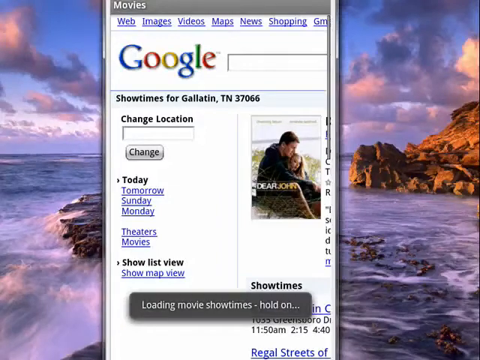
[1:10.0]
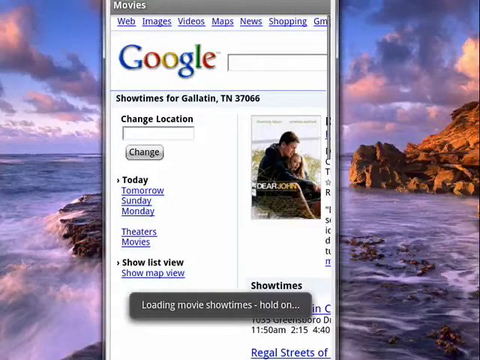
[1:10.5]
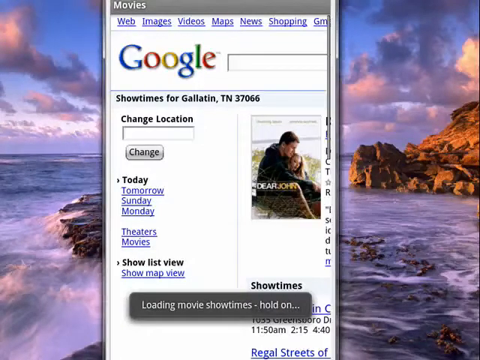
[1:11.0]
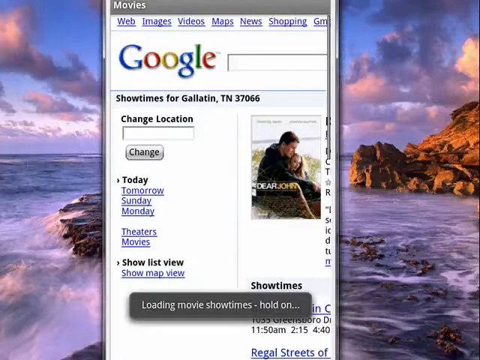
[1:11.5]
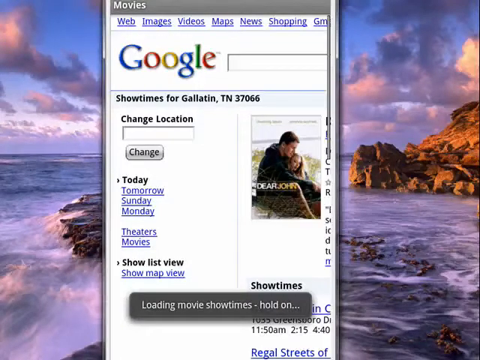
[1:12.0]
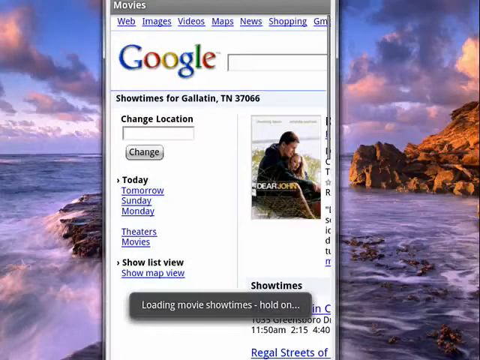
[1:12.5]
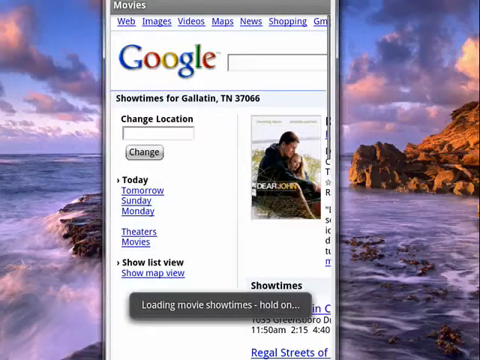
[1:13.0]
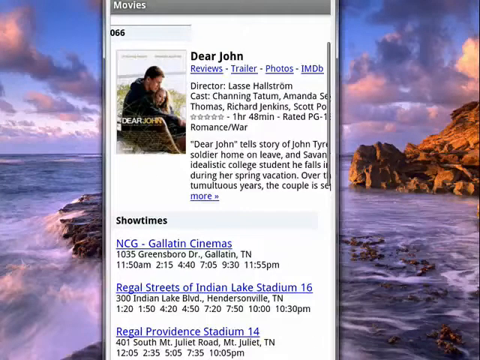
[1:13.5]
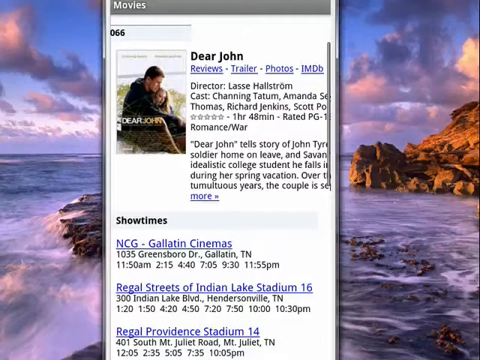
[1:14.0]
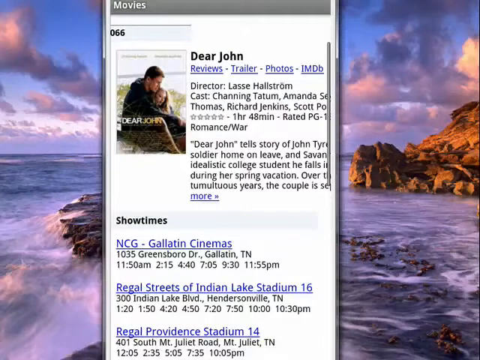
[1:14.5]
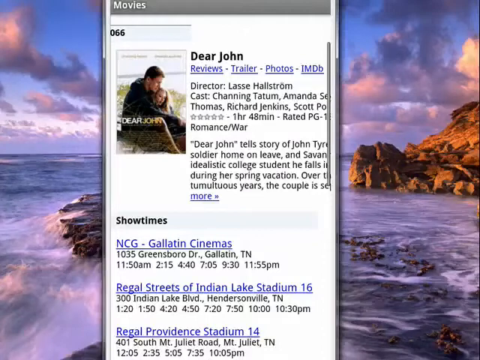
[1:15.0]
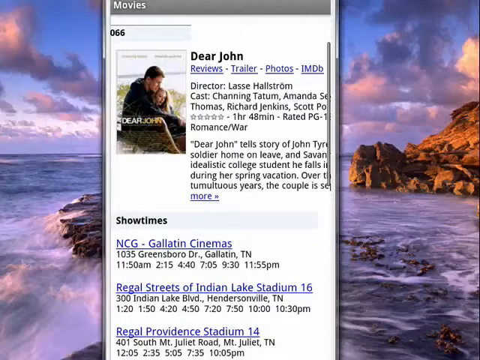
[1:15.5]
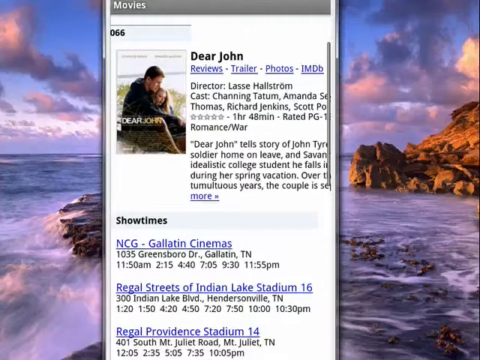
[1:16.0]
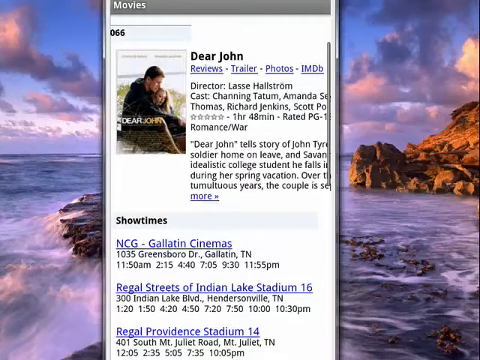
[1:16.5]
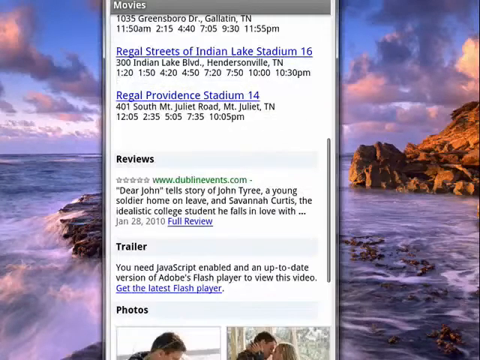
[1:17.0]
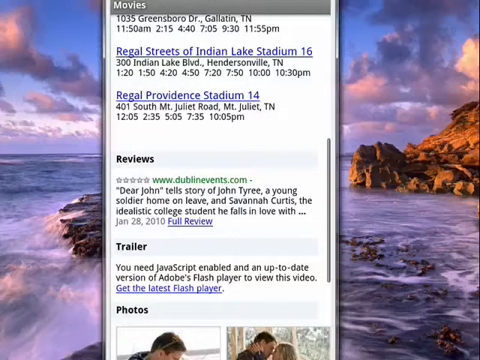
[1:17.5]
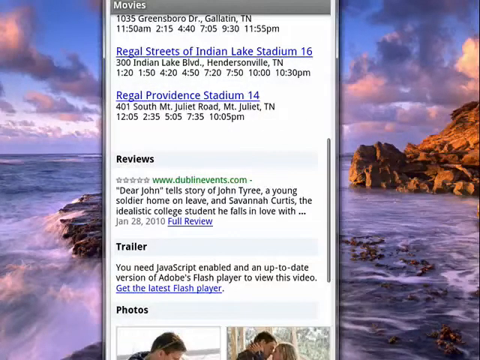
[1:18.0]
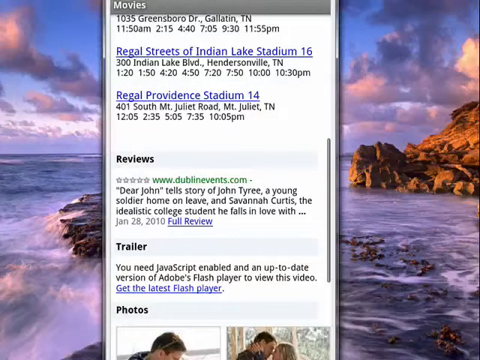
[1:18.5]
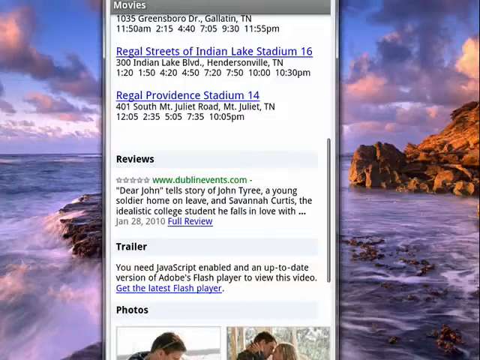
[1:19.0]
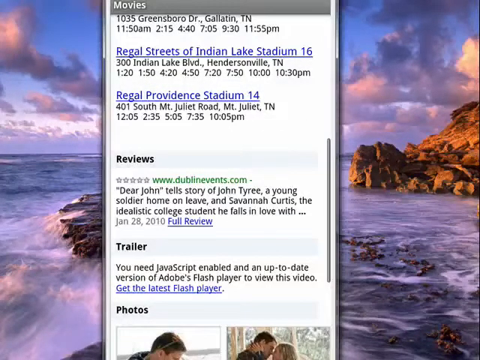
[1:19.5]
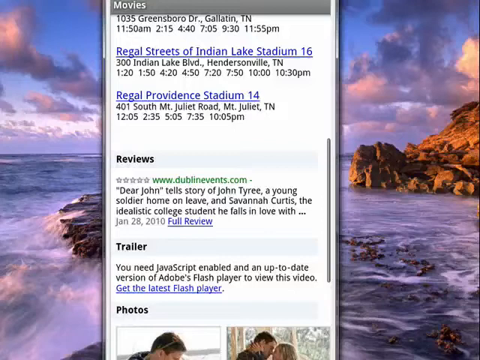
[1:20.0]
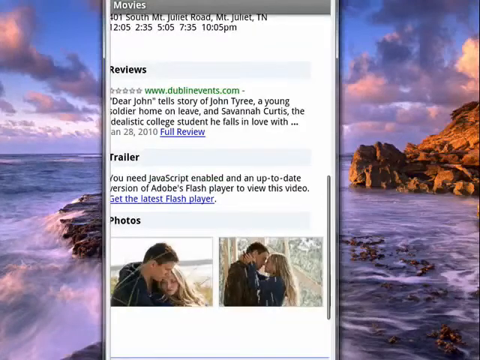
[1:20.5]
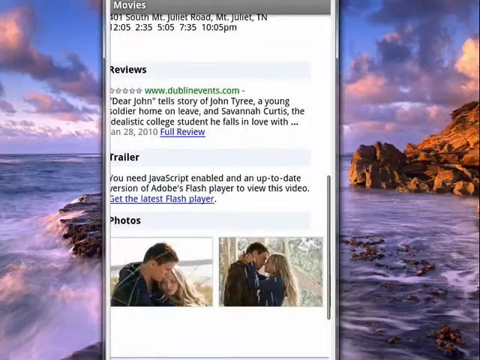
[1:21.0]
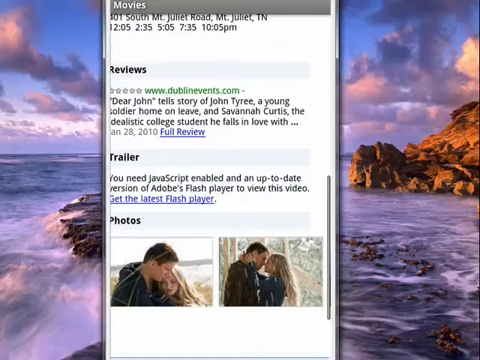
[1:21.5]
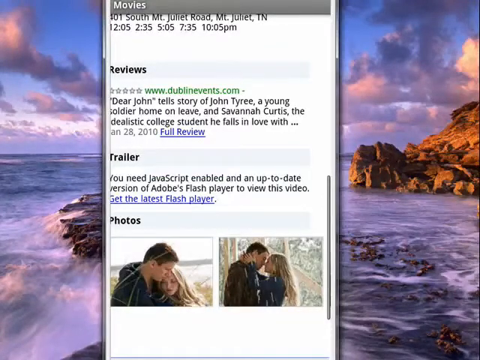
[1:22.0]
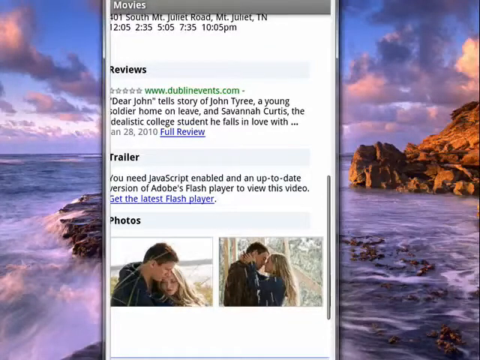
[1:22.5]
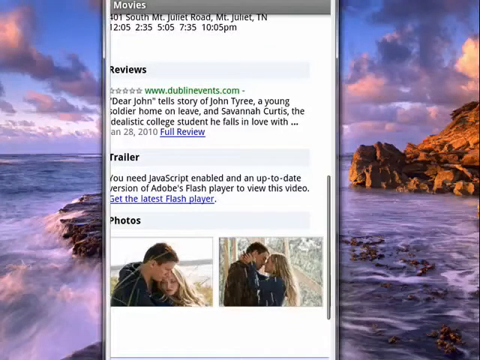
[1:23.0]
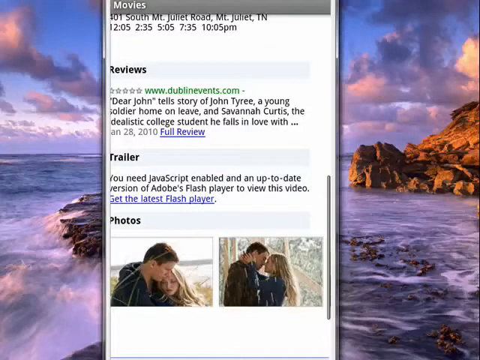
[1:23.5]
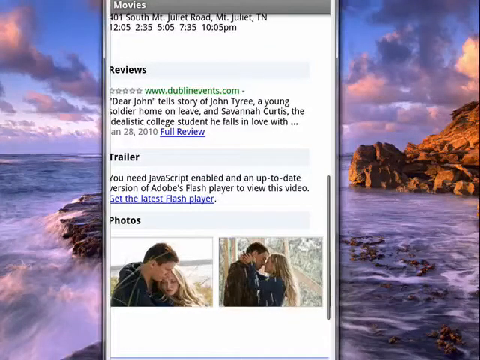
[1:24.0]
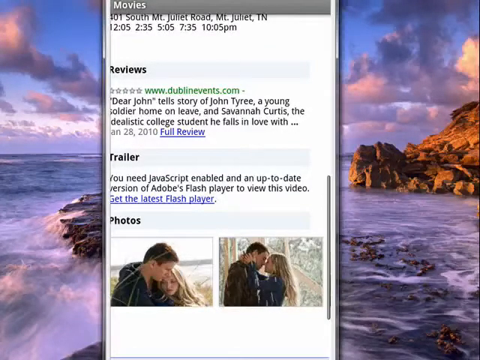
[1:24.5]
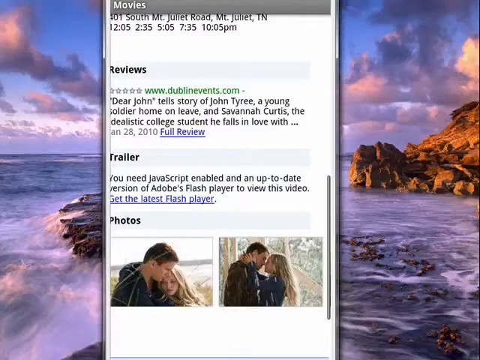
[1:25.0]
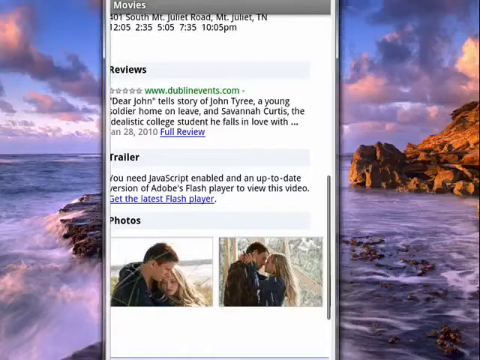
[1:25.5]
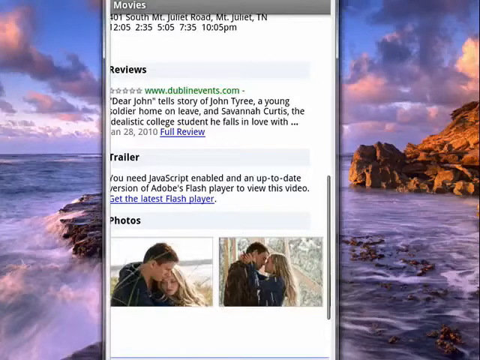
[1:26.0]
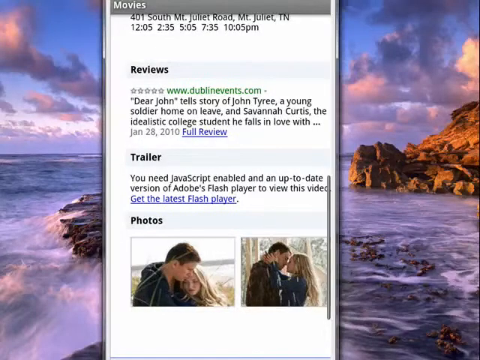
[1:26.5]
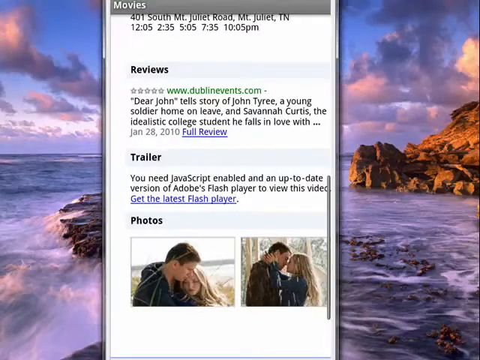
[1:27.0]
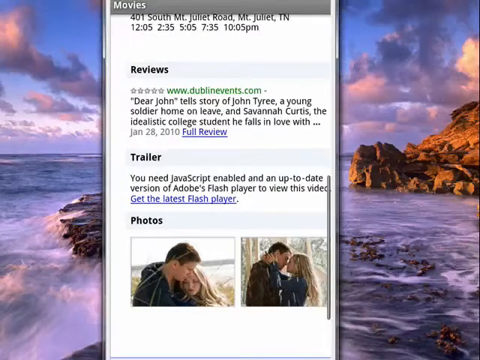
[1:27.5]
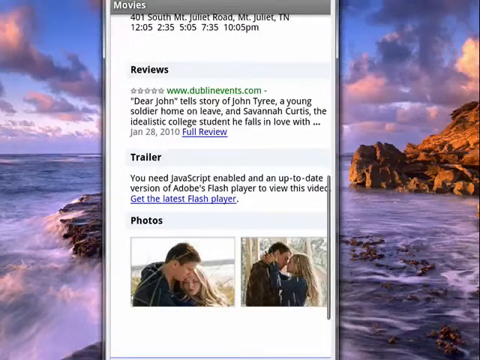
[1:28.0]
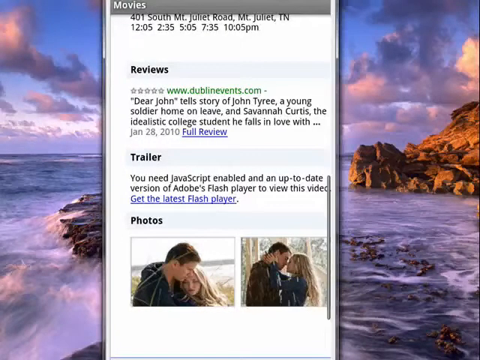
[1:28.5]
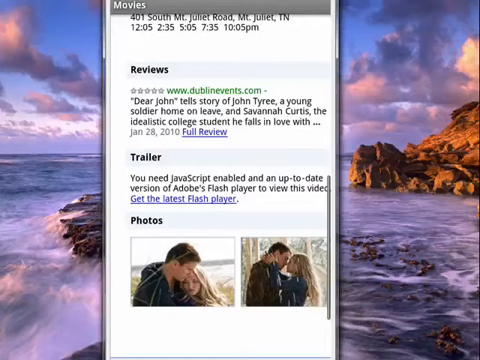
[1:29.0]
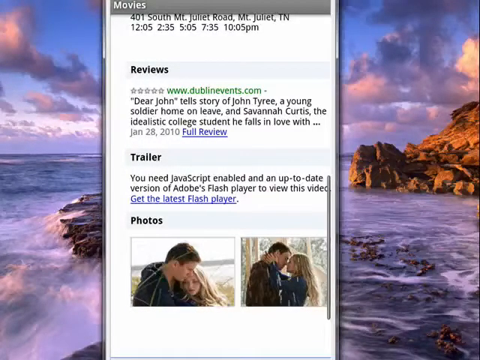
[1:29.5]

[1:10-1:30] The showtimes are for the zip code entered earlier: the page says "showtimes for Gallatin TN 37066," with an option underneath to change the location using a text box. It lists different days to pick for a showtime, such as tomorrow, Sunday and Monday, and can be viewed as either a list view or a map view. Various cinemas are listed below under the showtime section: NCG Gallatin Cinemas, with multiple times from 11.50am up to 11.55pm, and Regal Streets of Indian Lake Stadium, with times from 1.20pm up to 10.30pm. The page scrolls down to show the reviews, then the trailer, and then photos of the actor and actress who play the main roles in the movie. In the trailer section the trailer cannot be seen, as a message says JavaScript and the latest flash player are needed.